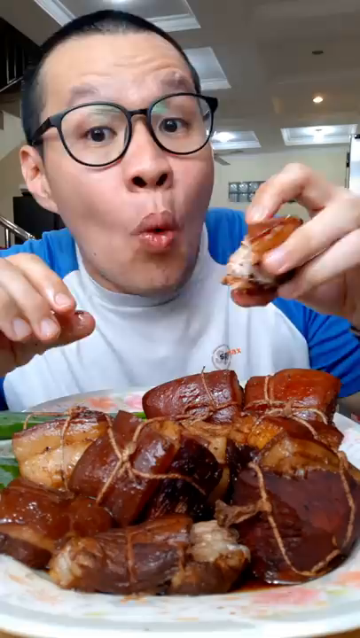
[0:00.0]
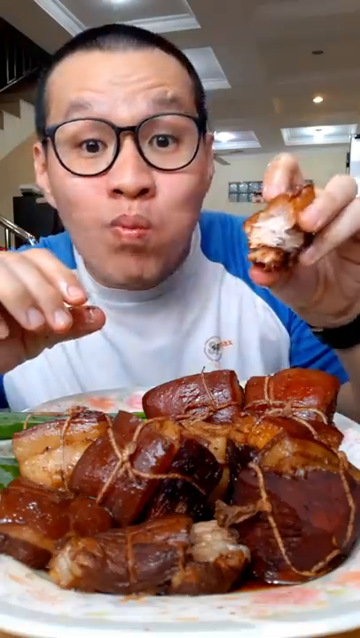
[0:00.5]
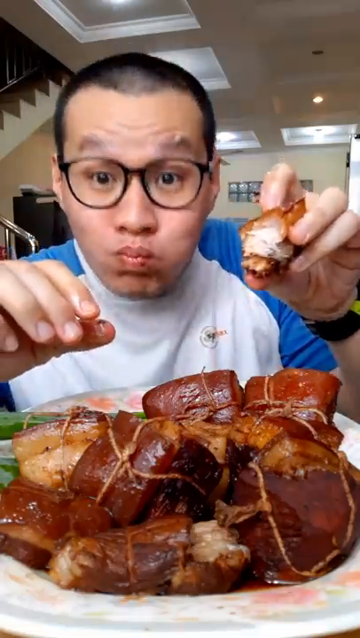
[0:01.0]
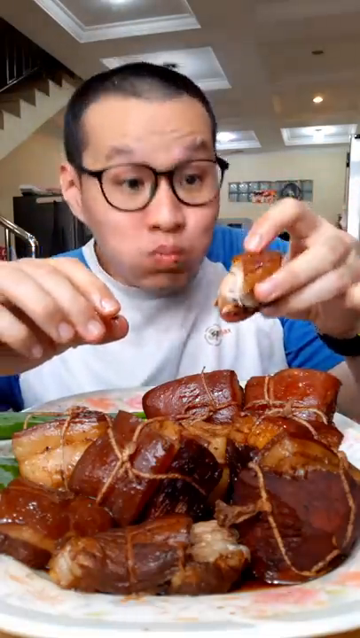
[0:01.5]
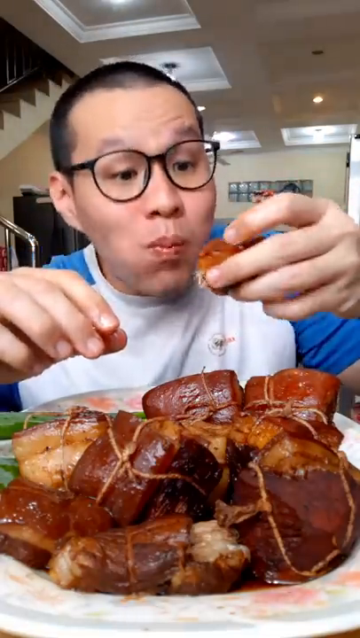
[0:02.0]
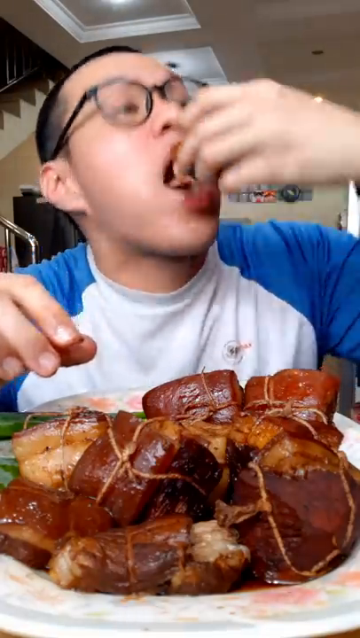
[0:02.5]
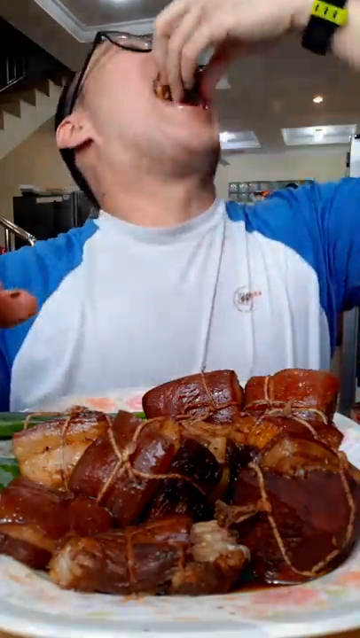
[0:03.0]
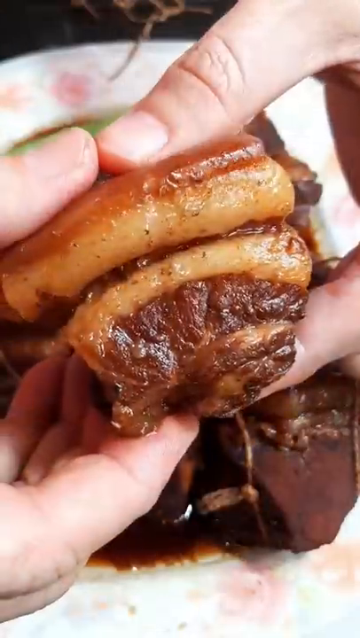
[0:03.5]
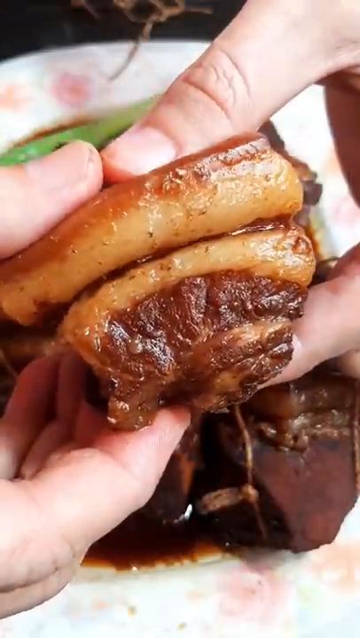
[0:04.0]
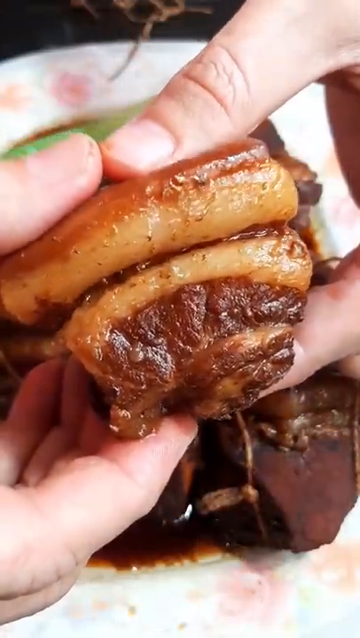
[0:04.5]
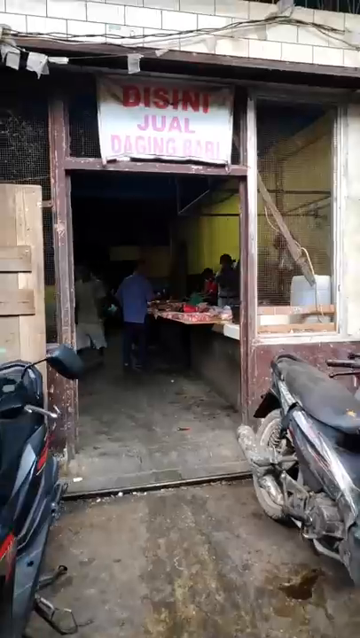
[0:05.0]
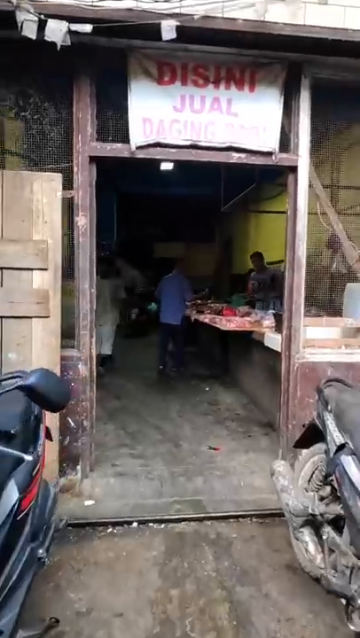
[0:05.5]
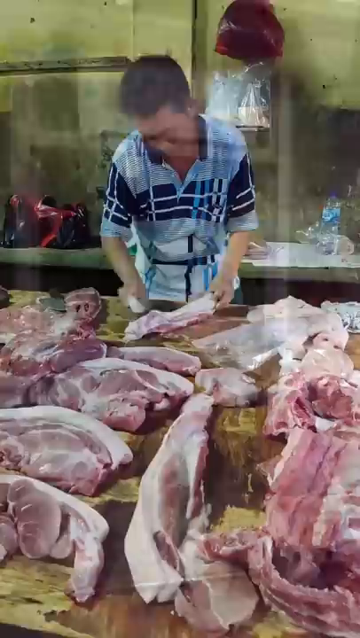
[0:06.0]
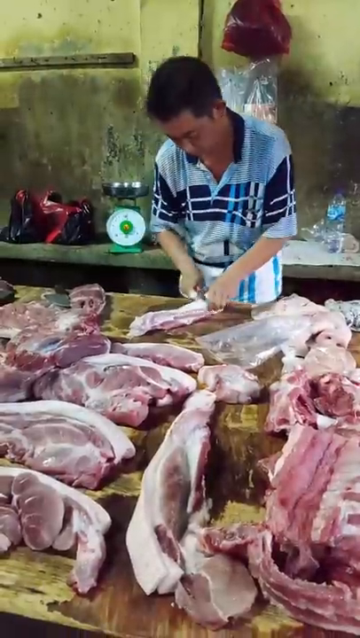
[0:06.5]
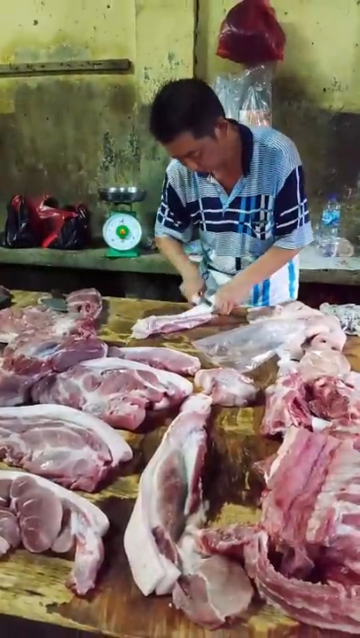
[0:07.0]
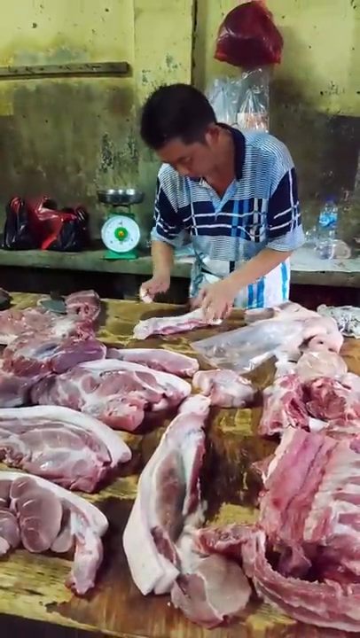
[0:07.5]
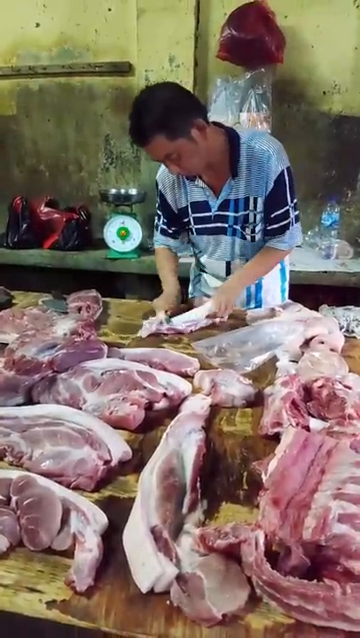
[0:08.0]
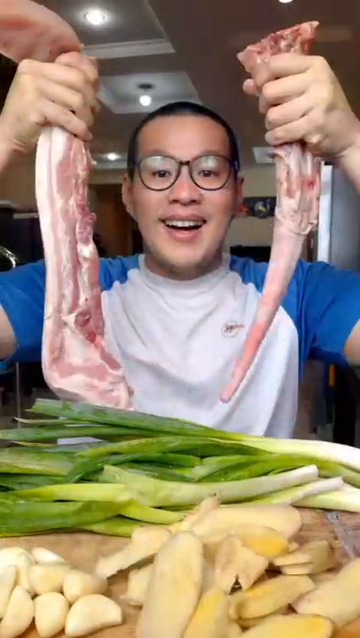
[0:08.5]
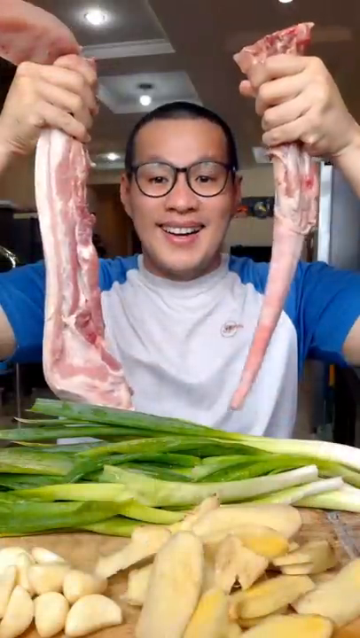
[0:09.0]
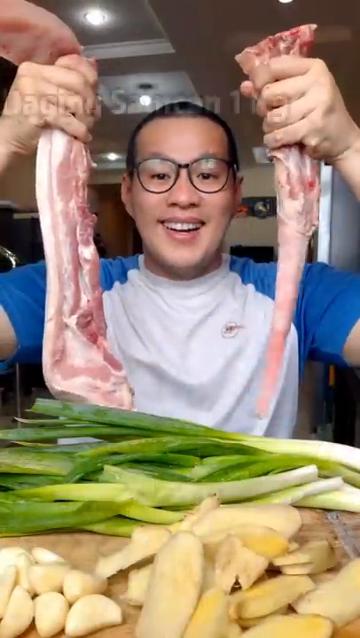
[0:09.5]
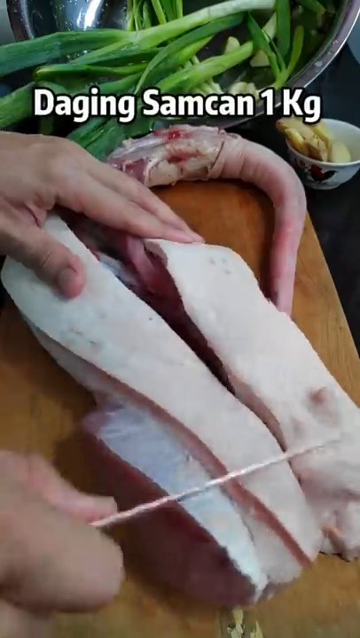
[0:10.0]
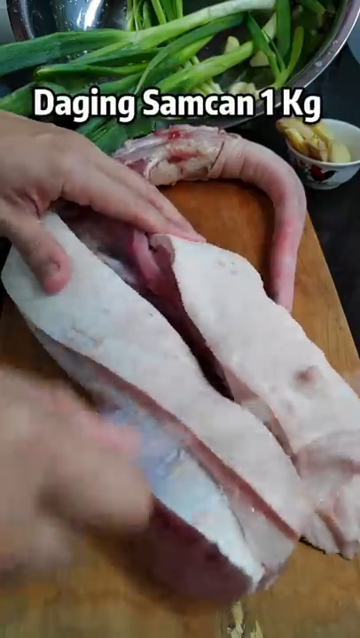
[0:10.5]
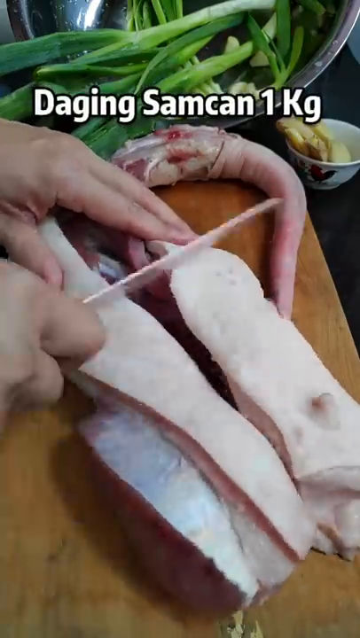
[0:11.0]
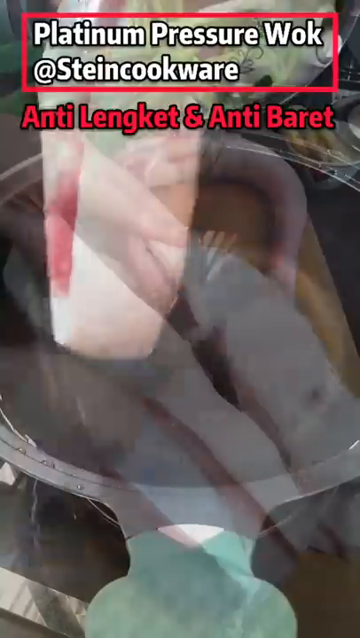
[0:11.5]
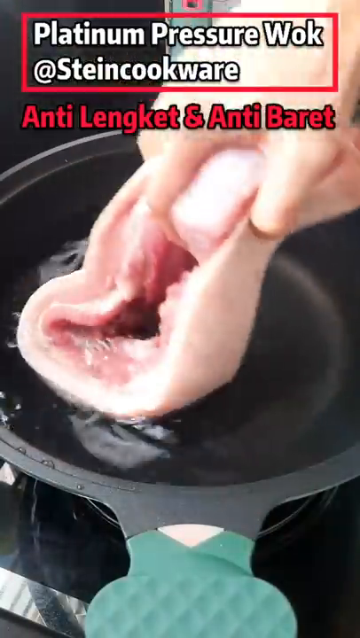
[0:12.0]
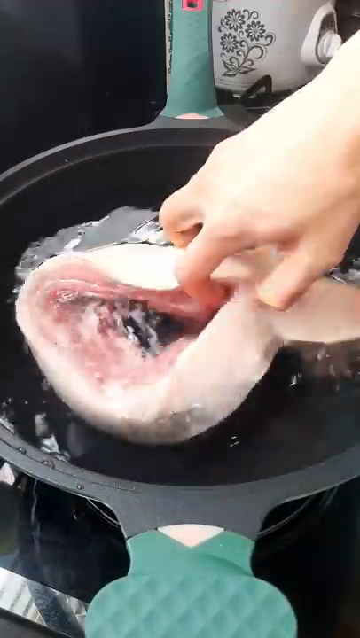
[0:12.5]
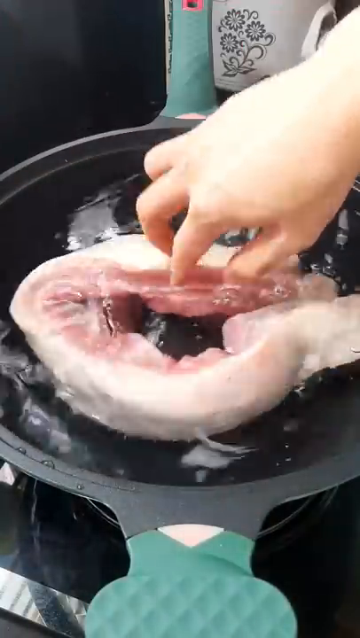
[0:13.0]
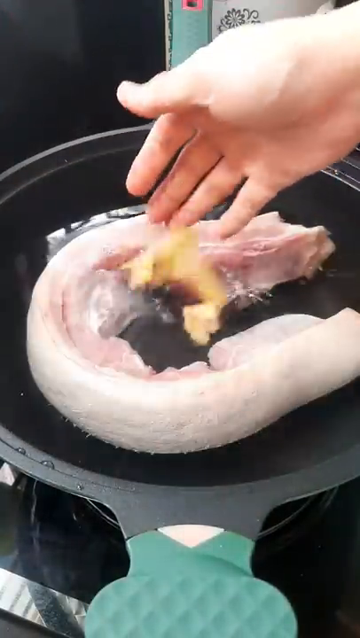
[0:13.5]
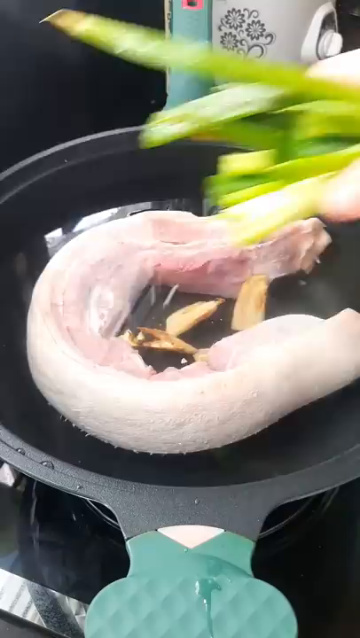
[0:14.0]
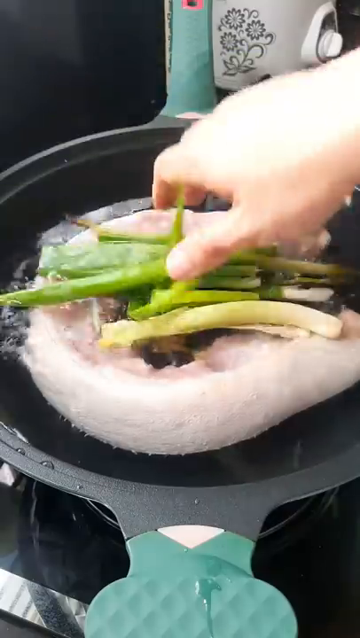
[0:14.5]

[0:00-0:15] A man makes braised pork belly, or Dongpo rou; the video appears to be made by pinpin goldfish. He has a bald head, glasses, seemingly a beard, and wears a white shirt with blue sleeves, and he appears to be in a two-story apartment. He holds pieces of the braised pork belly, which seem to be tied up with string into little pieces, and eats them with his hand, taking a whole bite. The meat looks very squishy, and he shows how soft it is. He then goes to a meat market to buy pork belly; the butcher apparently cuts it up for him, and he swings the meat pieces around. There are big leeks or big spring onions along with big pieces of ginger and garlic. He scrapes the skin of the pork belly and then boils it in water with the seasoning.